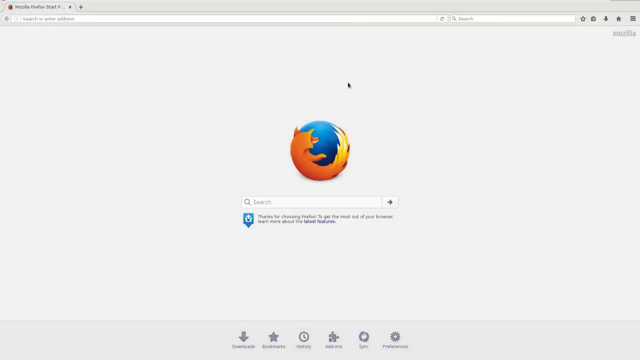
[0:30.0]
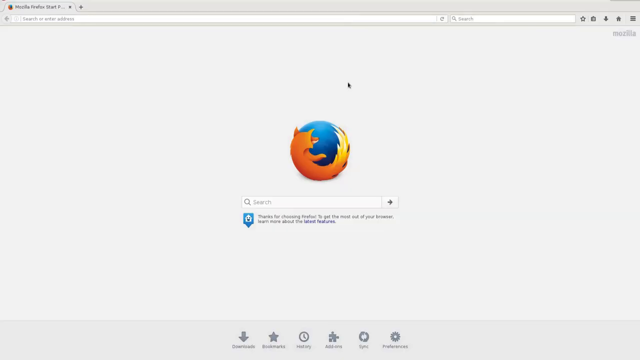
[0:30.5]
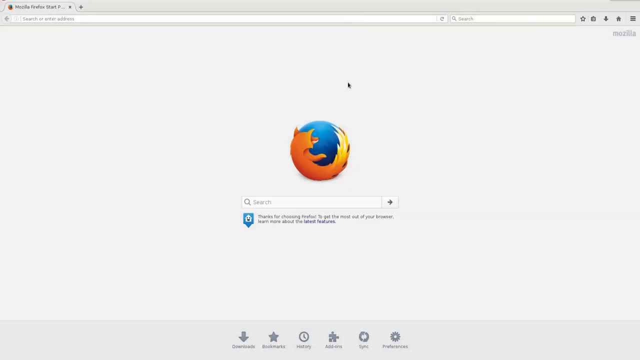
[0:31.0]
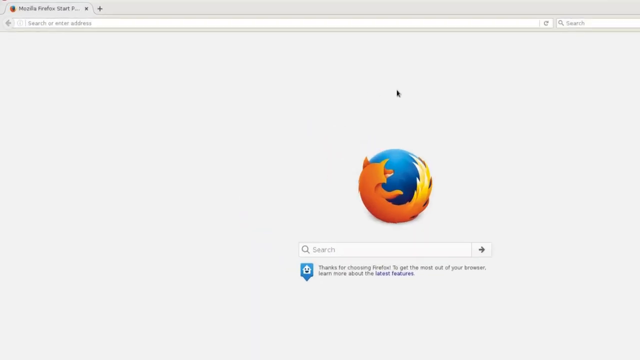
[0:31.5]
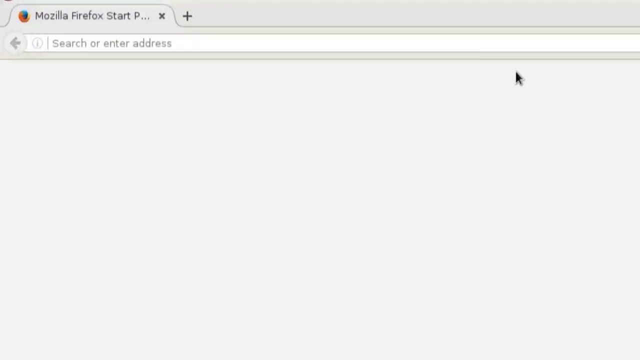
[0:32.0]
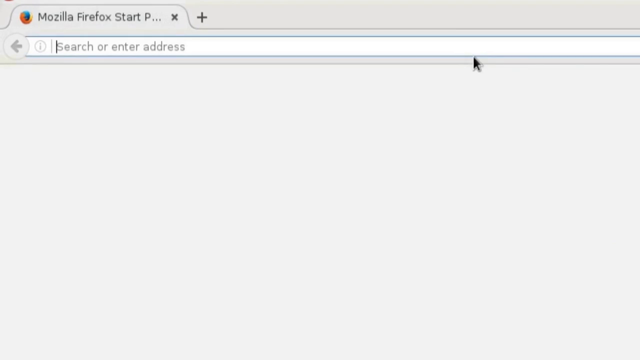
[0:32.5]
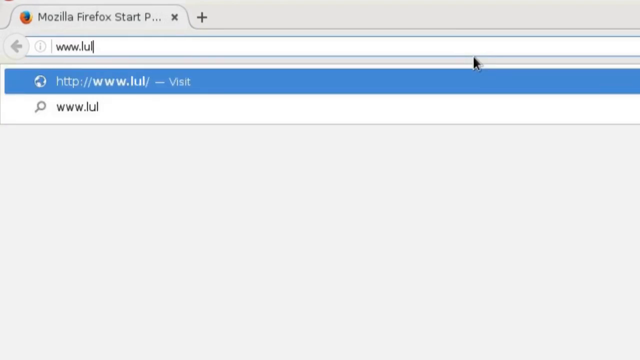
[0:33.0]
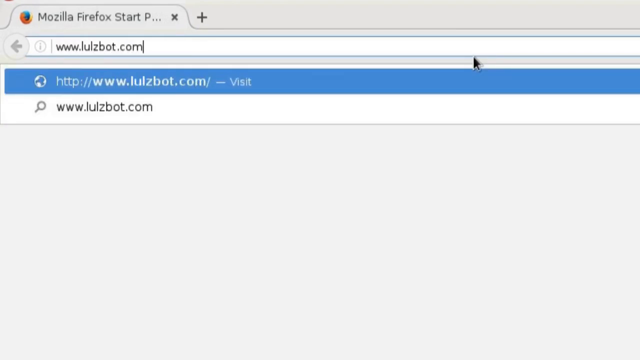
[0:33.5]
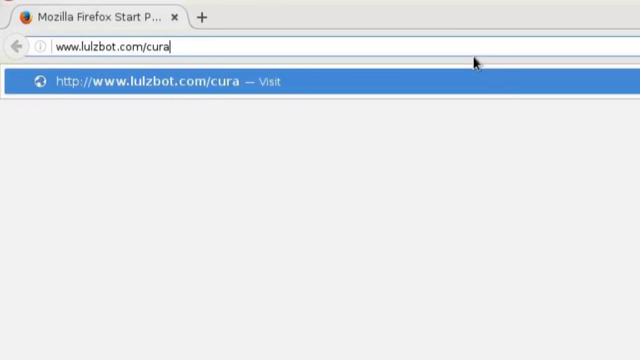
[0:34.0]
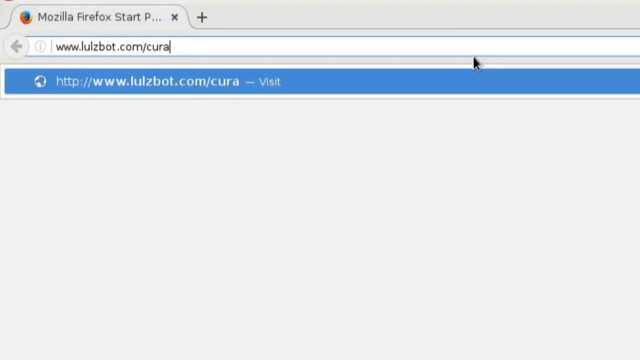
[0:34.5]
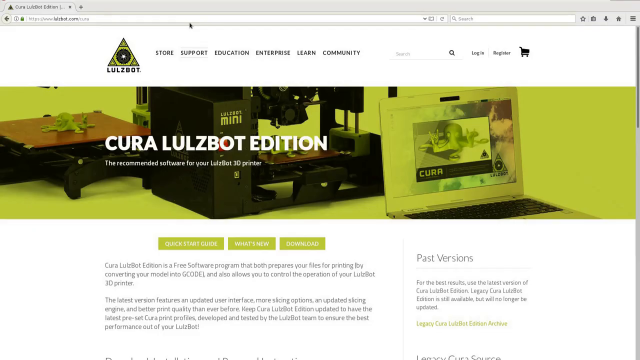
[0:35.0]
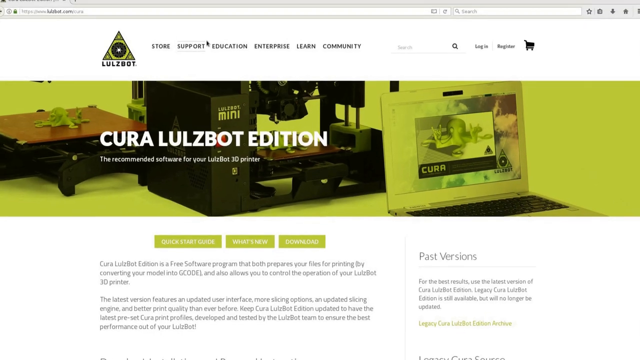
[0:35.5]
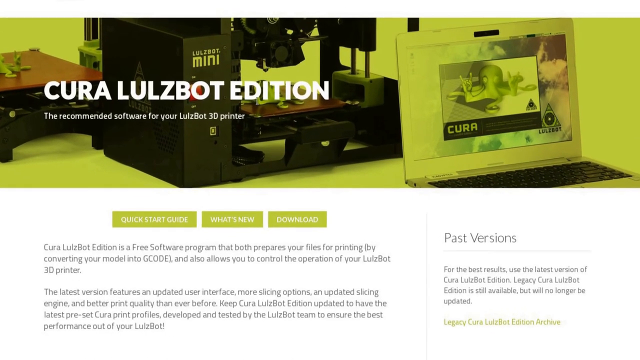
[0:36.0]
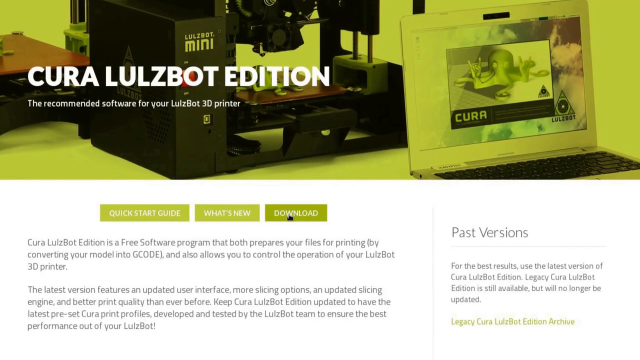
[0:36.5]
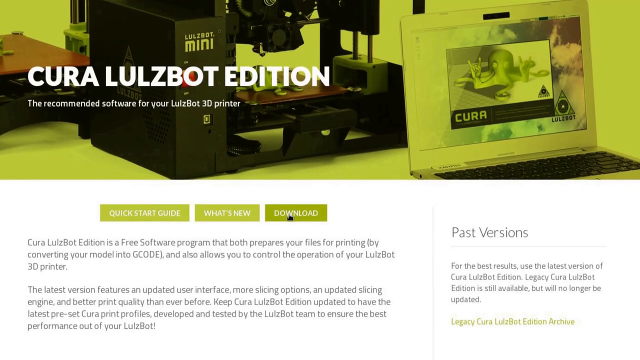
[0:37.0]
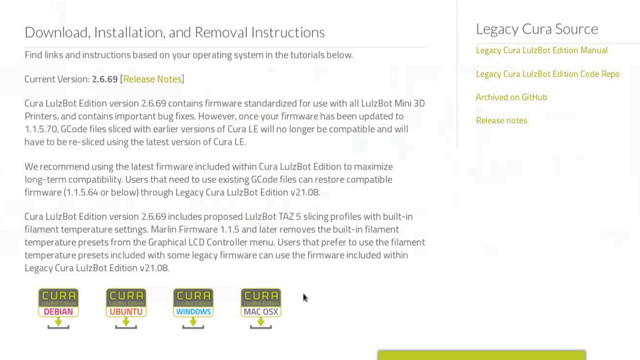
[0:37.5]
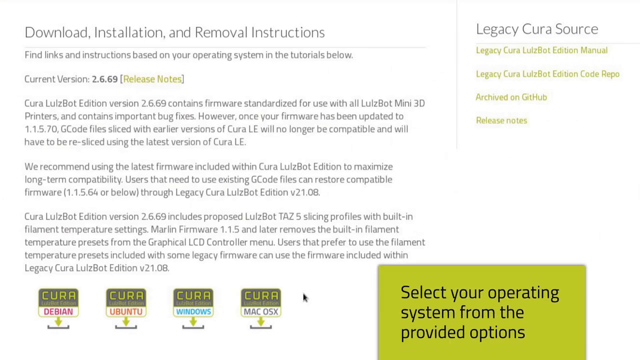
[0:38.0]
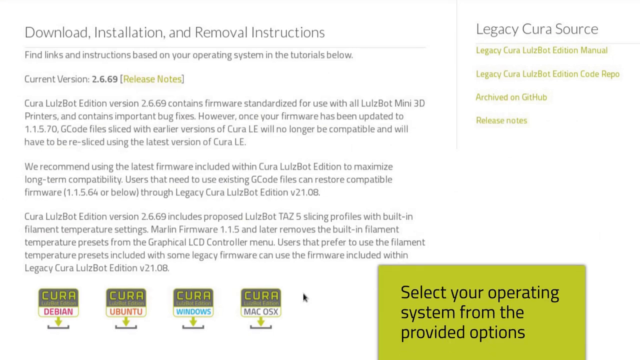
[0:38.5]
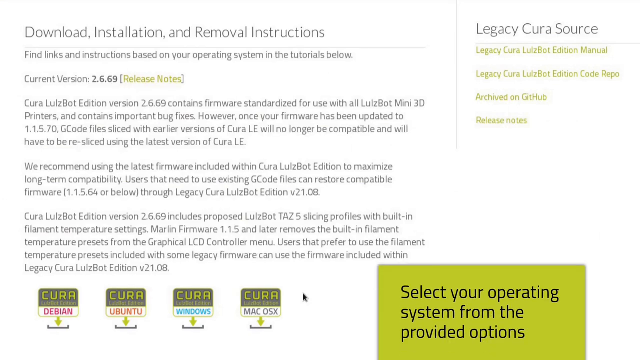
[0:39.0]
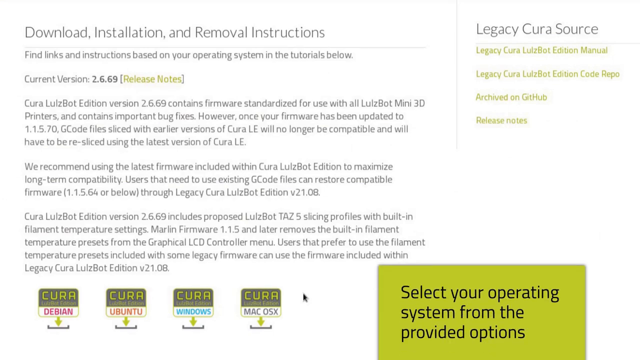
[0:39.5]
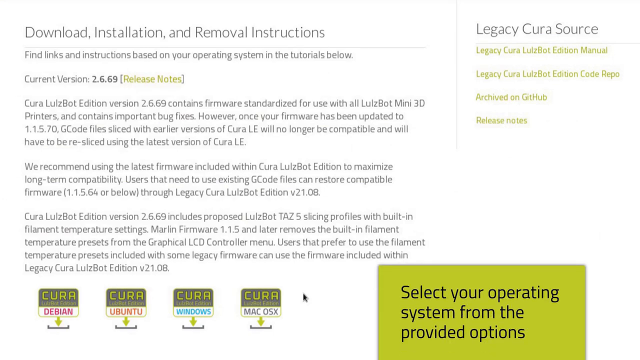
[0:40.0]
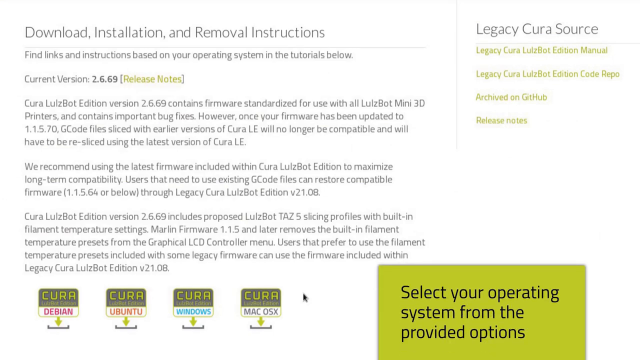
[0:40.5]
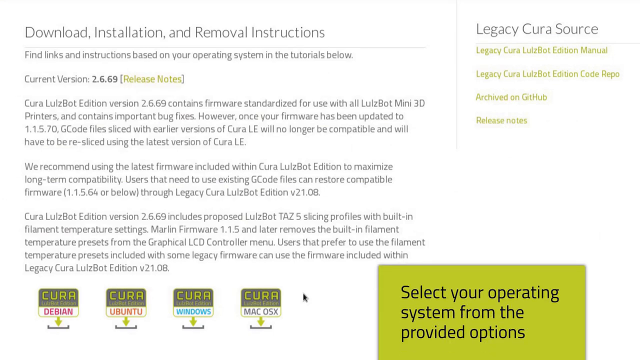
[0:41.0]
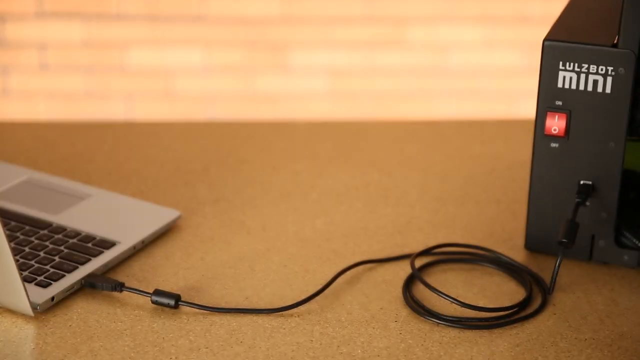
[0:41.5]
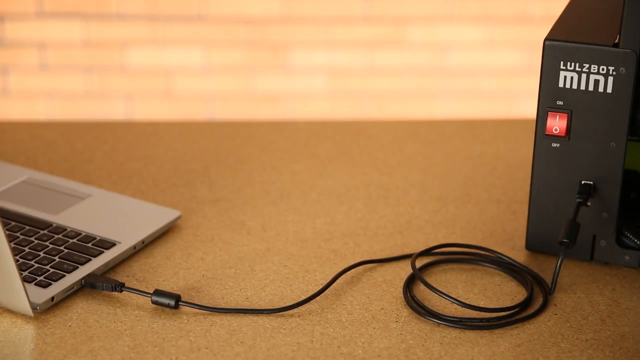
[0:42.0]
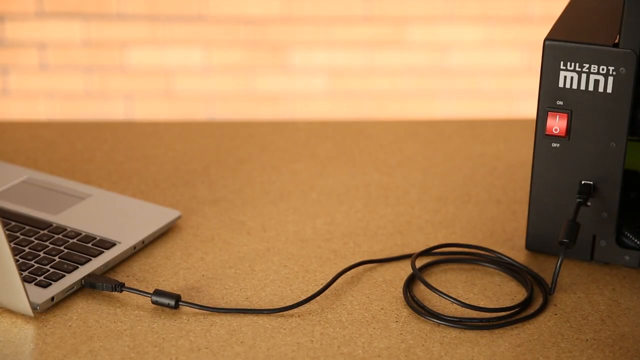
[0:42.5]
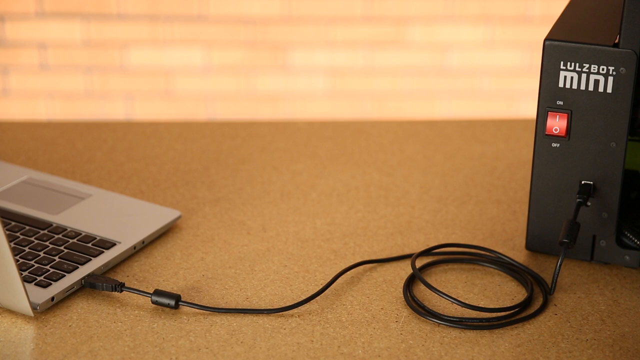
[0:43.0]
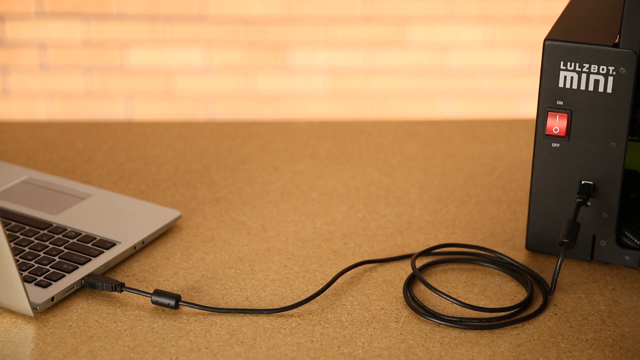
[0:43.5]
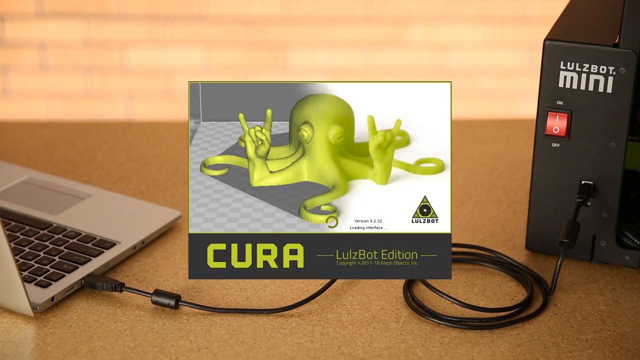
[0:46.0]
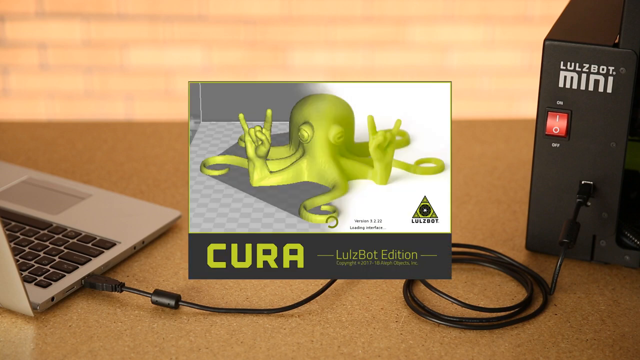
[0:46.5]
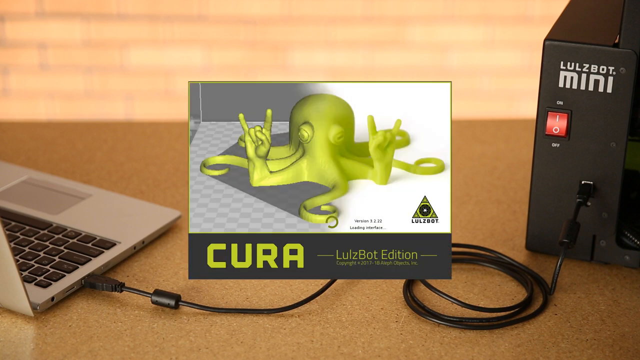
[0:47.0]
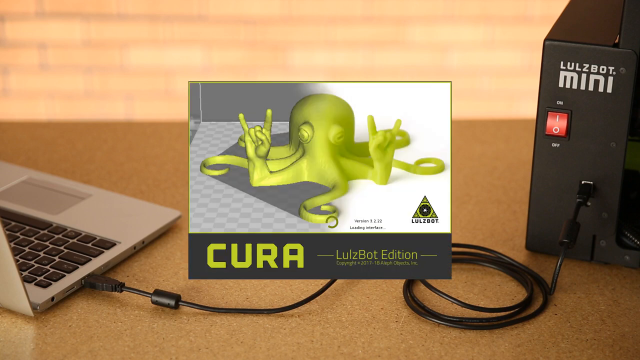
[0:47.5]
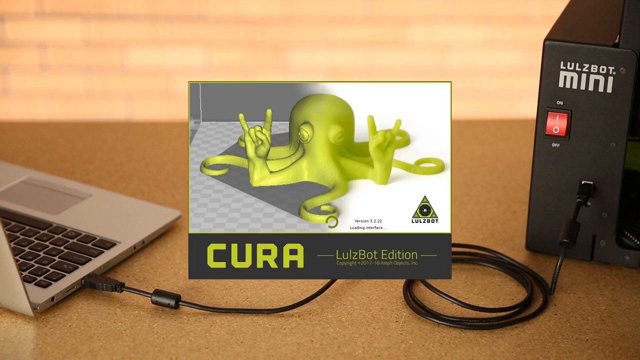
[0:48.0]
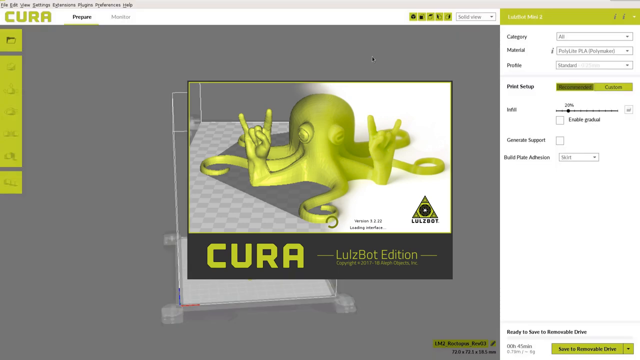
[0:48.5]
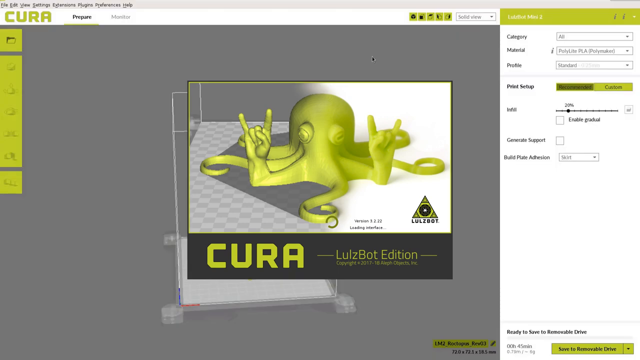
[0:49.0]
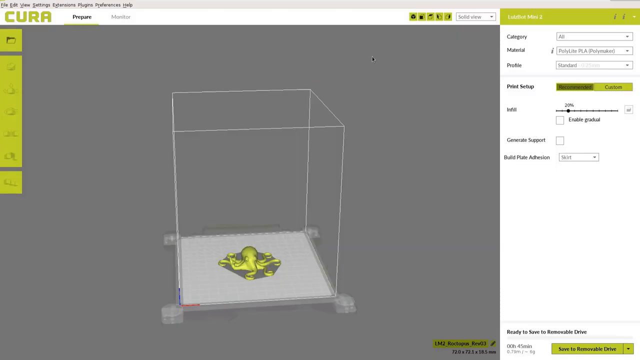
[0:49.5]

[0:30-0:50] A computer screen shows the start page of the Firefox web browser. The view zooms in to the upper right, where someone types the URL "www.lulzbot.com/cura". A web page appears with the heading "Cura LulzBot Edition", and underneath it says "the recommended software for your LulzBot 3D printer". Further text says "Cura LulzBot Edition is a free software program that both prepares your files for printing by converting your model into code" and "It also allows you to control the operation of your LulzBot 3D printer." There is a Download button, with download options for Debian, Ubuntu, Windows, and macOS.